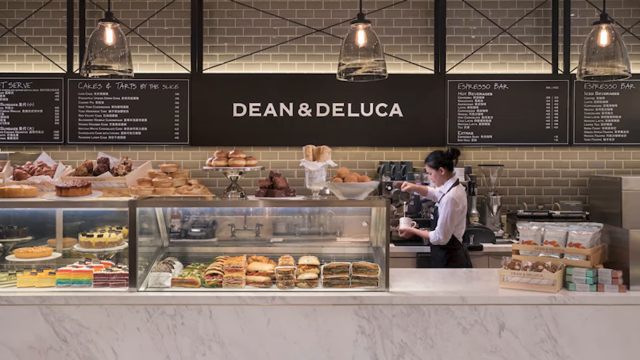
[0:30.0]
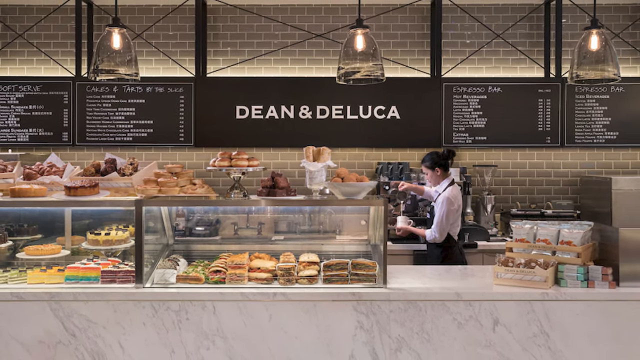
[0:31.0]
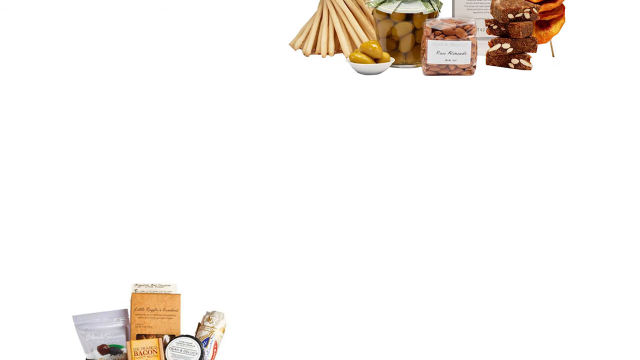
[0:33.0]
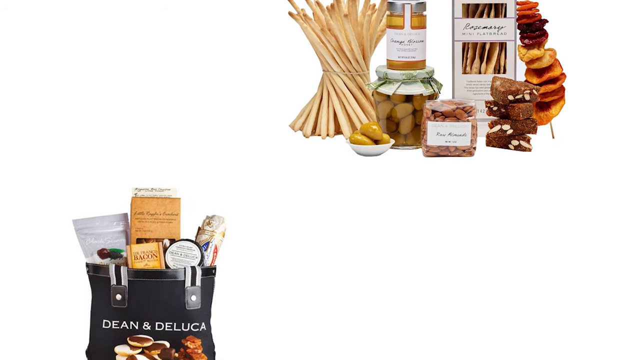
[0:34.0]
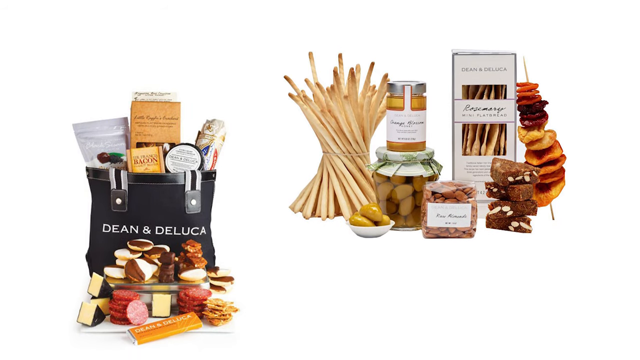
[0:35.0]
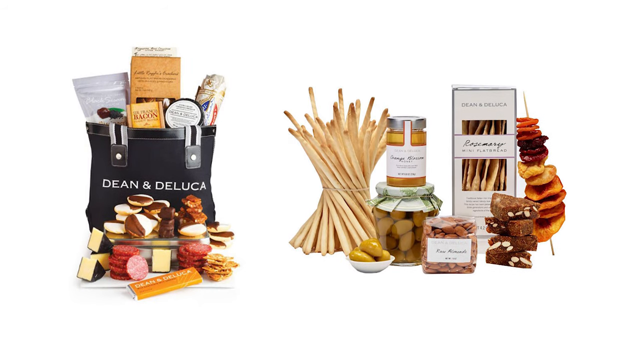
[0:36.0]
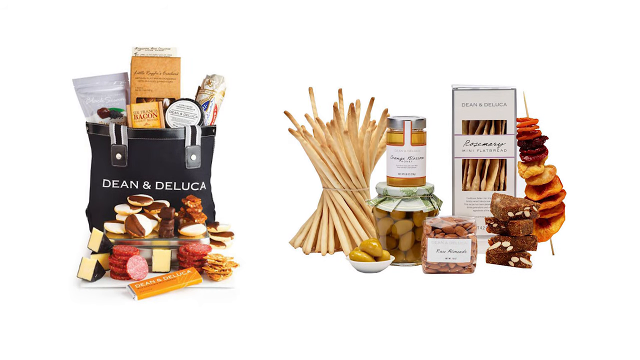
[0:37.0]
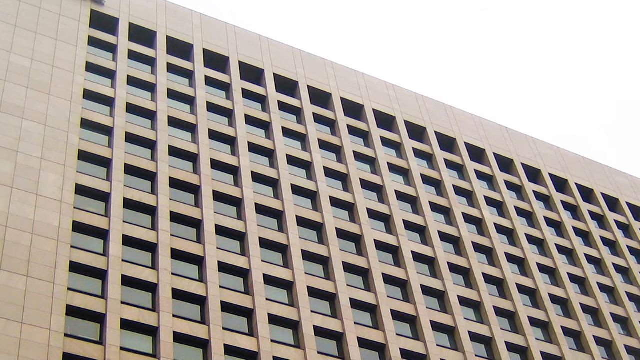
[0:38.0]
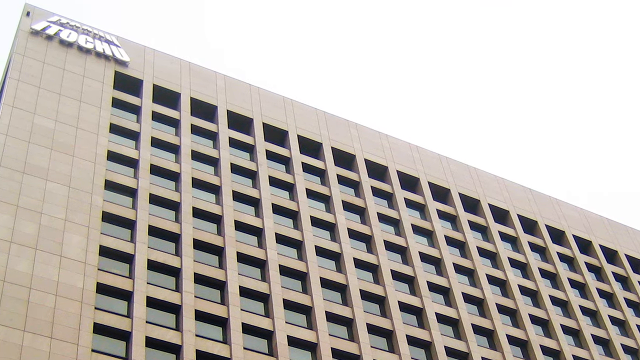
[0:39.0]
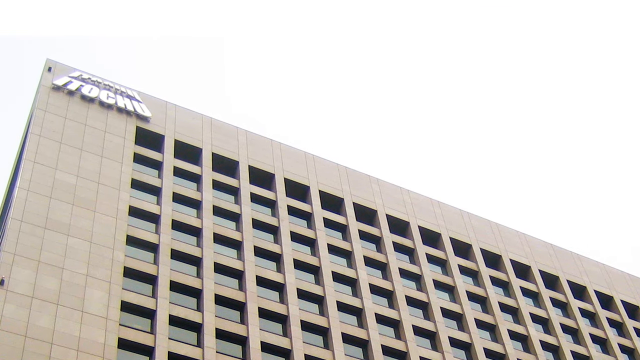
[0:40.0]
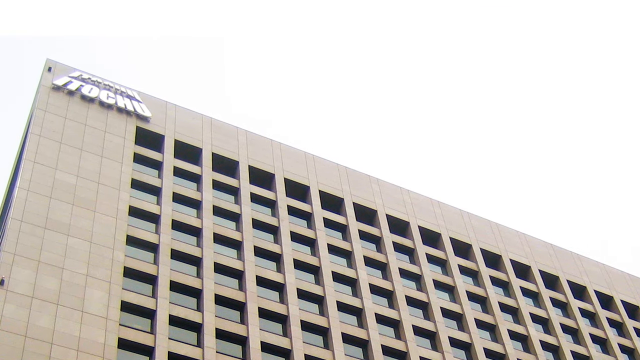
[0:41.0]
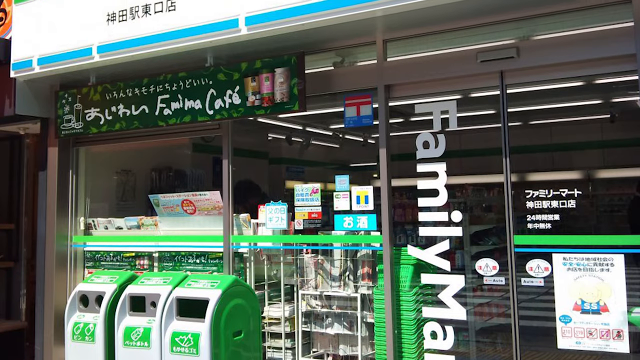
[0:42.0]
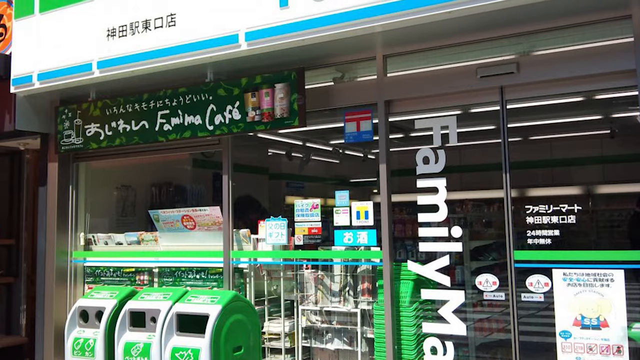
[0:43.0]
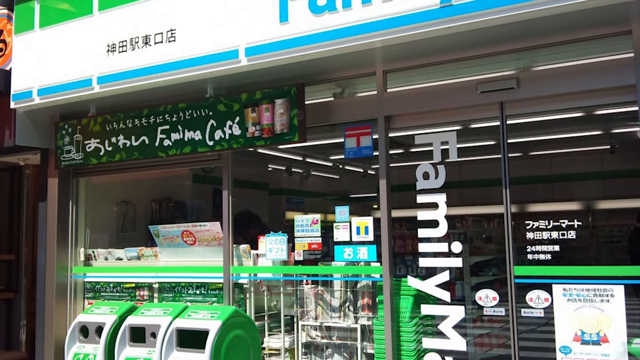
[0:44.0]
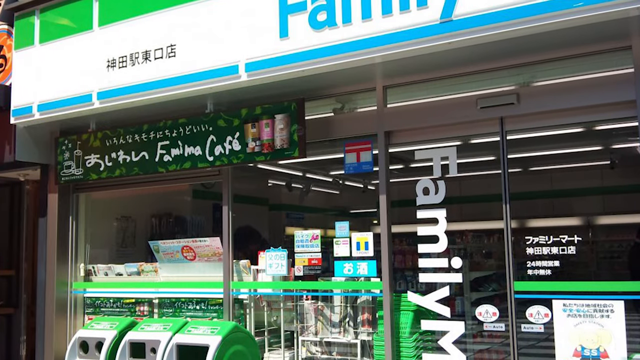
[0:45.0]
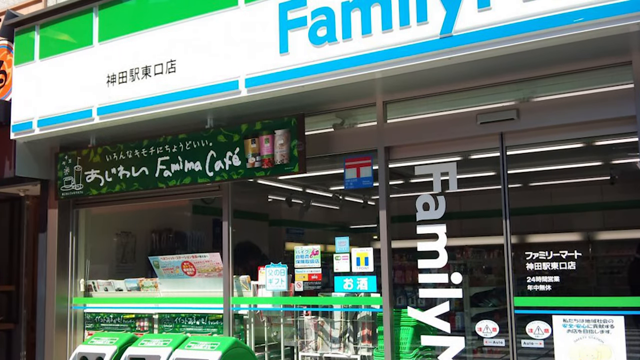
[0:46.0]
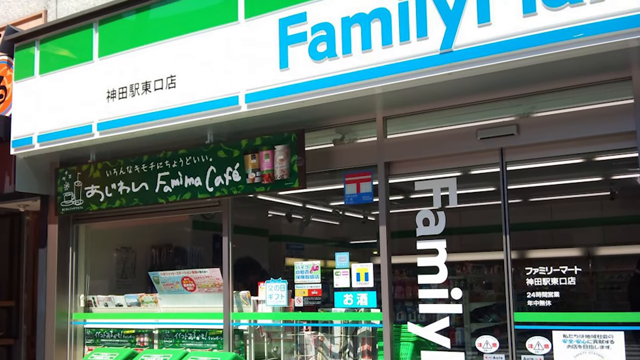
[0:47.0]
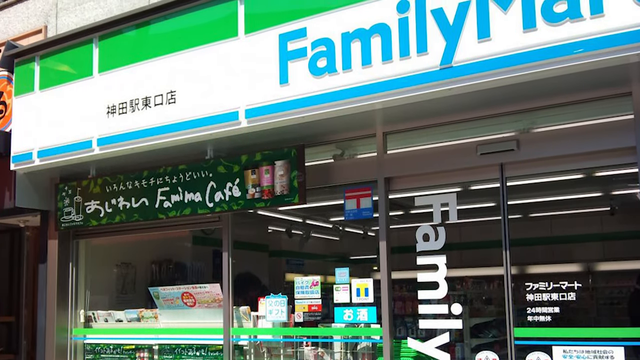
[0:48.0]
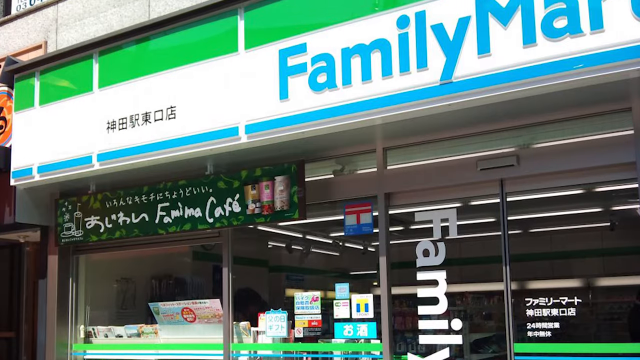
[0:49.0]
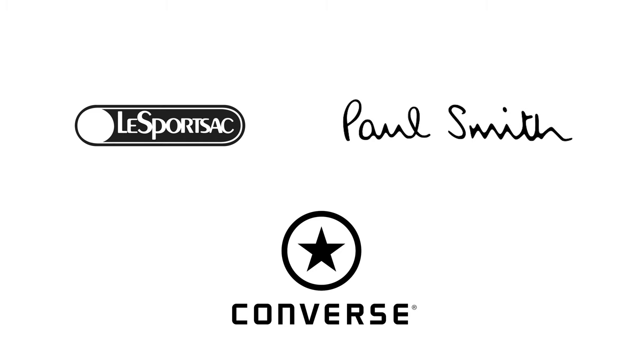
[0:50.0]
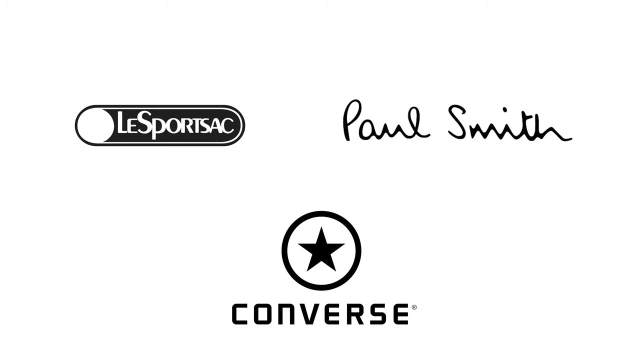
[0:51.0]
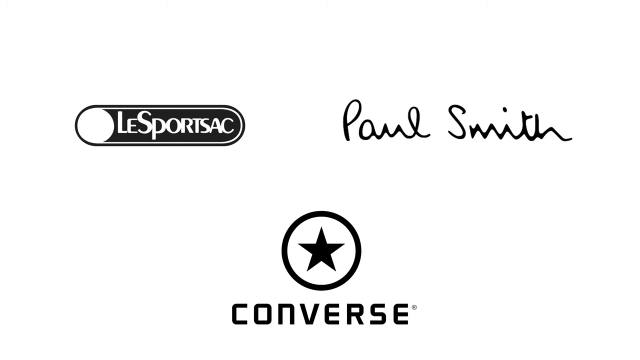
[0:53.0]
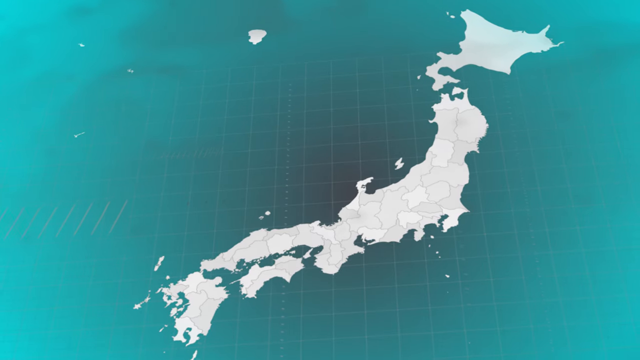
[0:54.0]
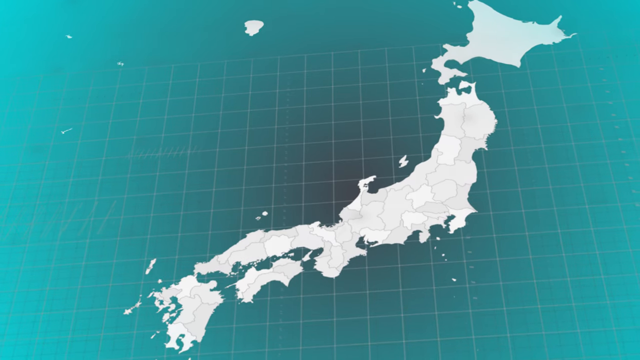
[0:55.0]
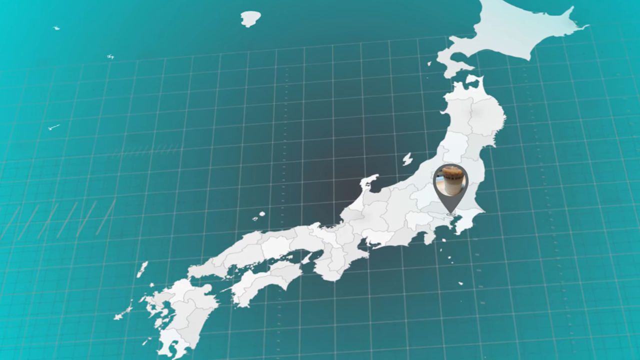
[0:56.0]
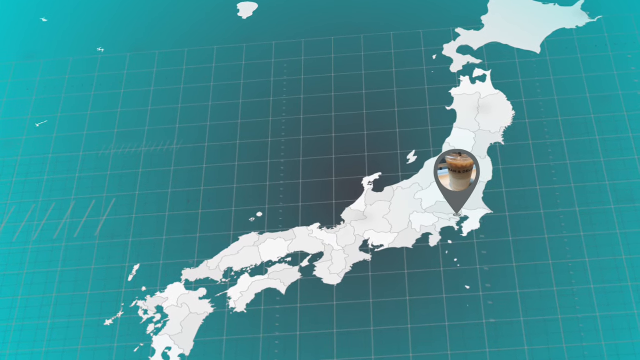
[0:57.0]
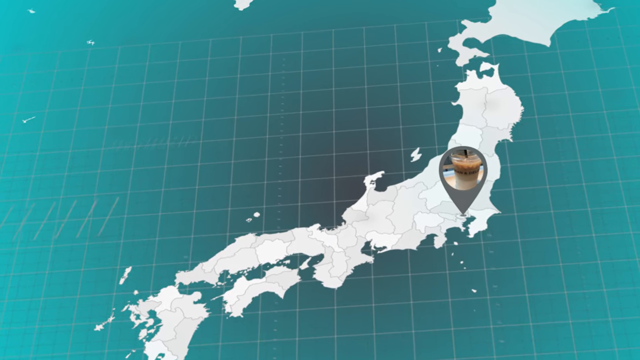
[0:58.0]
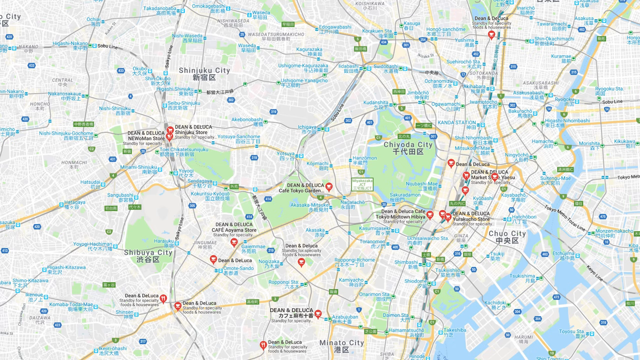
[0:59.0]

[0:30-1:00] A still photo of the inside of a Dean and DeLuca restaurant zooms out, showing the front counter with bakery sweets and breads inside and breads and foods on top. A few photos then come into view in the middle of the screen from top to bottom, showing Dean and DeLuca products, small foods, breads and packaging. A photo pans over to a top view of a business building, followed by an outside view of a cafe in Japan with Japanese wording, which appears to be titled Family Mart. A screen then shows three brands with their respective logos: The Sports AC, Paul Smith and Converse. Next comes a map of some islands, then a full map of what looks to be Japan with all its roads and towns, looking somewhat like Google Maps.